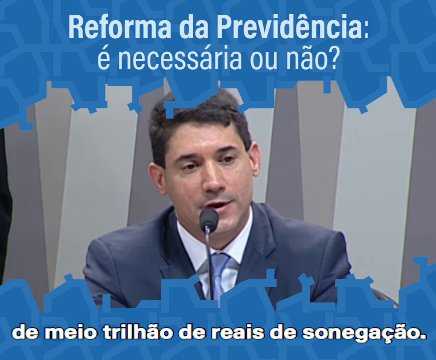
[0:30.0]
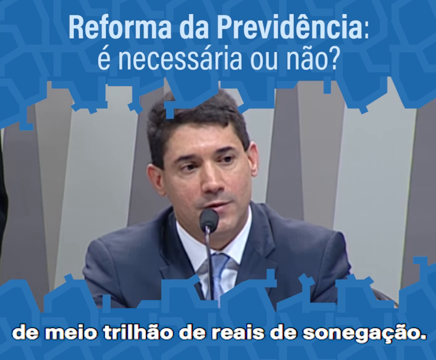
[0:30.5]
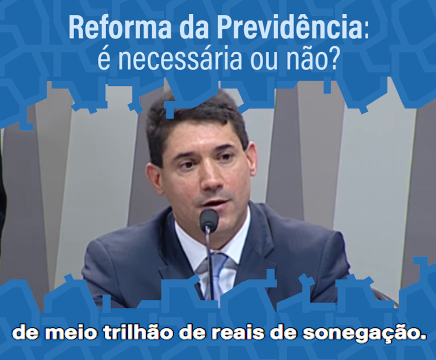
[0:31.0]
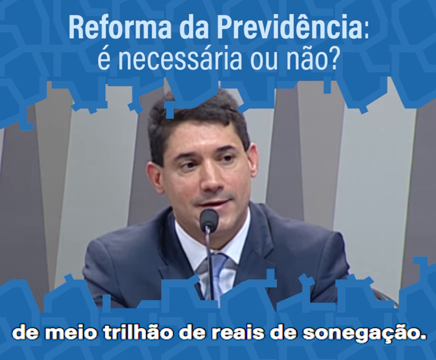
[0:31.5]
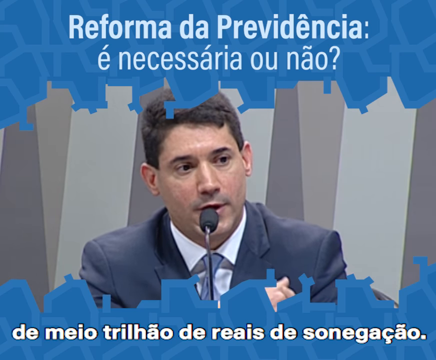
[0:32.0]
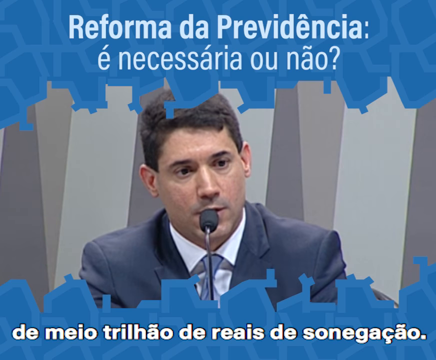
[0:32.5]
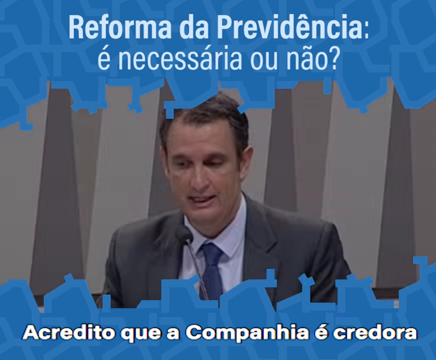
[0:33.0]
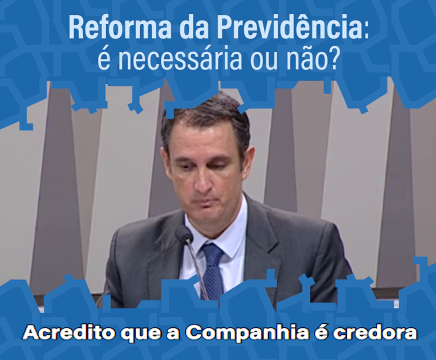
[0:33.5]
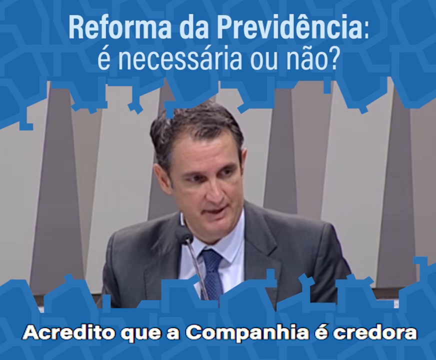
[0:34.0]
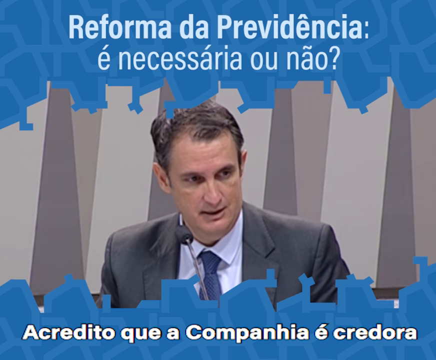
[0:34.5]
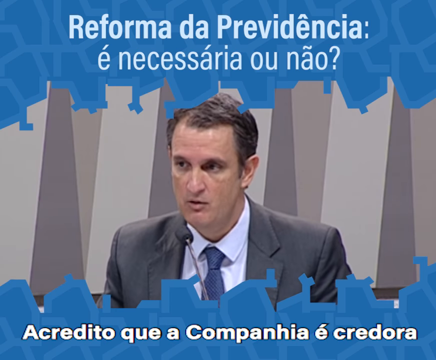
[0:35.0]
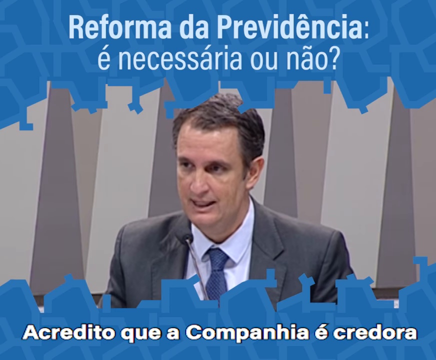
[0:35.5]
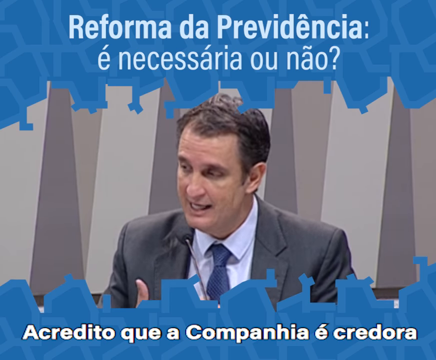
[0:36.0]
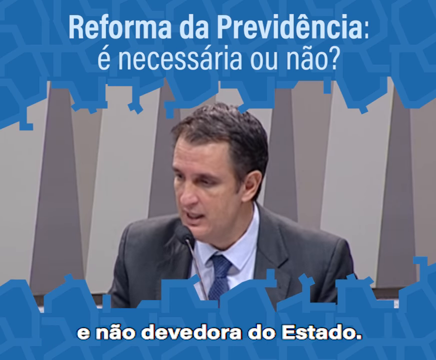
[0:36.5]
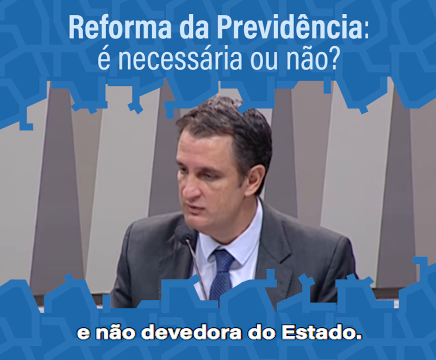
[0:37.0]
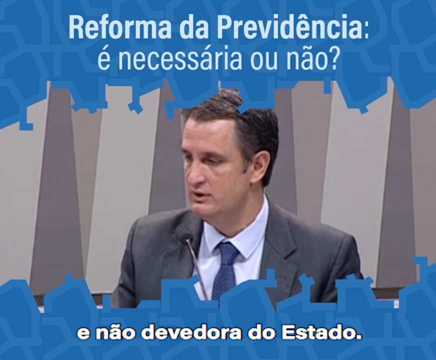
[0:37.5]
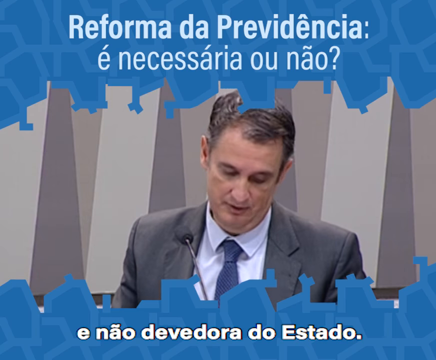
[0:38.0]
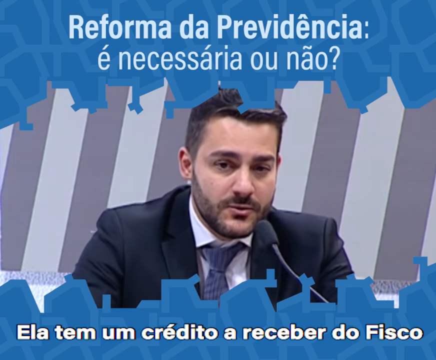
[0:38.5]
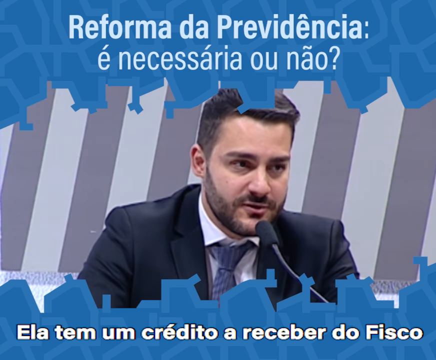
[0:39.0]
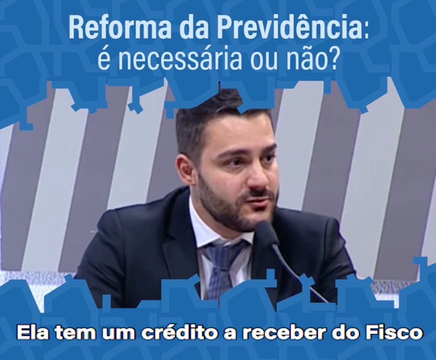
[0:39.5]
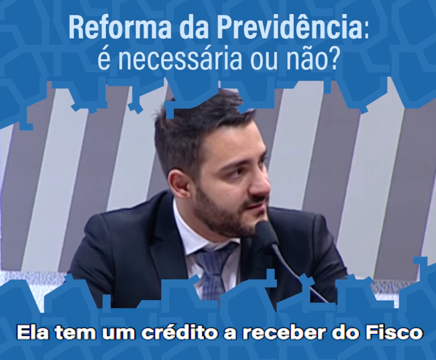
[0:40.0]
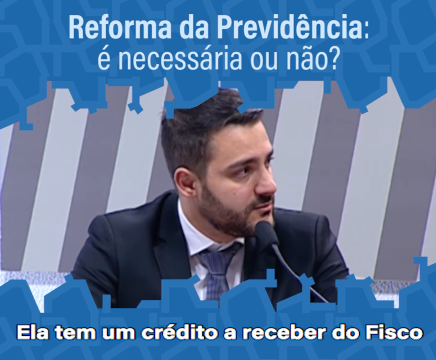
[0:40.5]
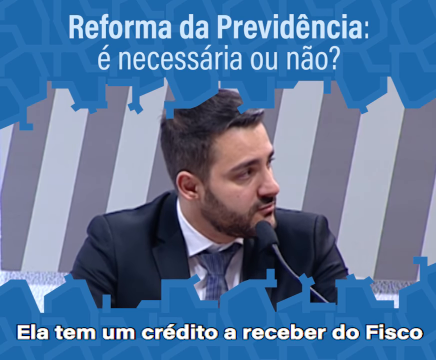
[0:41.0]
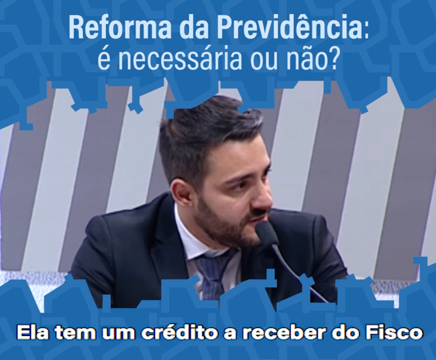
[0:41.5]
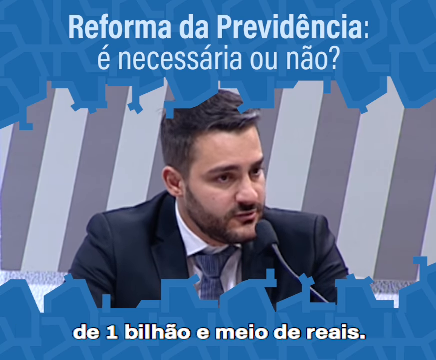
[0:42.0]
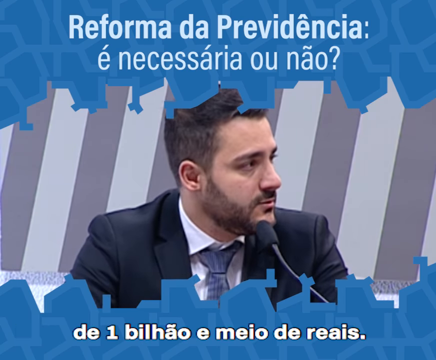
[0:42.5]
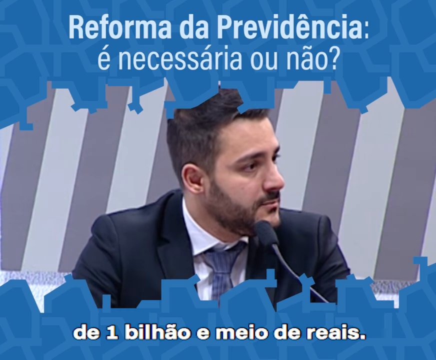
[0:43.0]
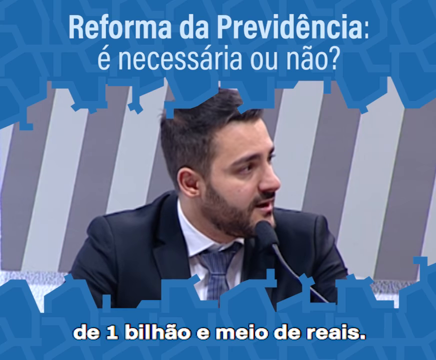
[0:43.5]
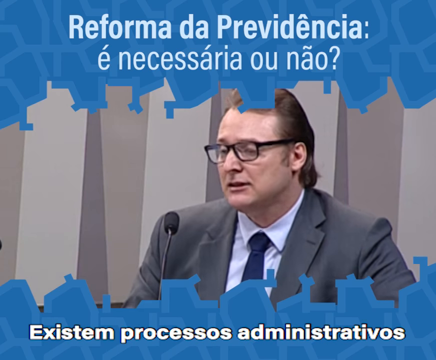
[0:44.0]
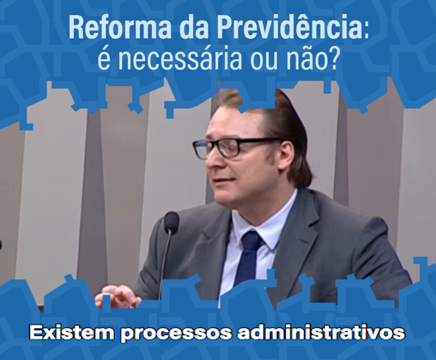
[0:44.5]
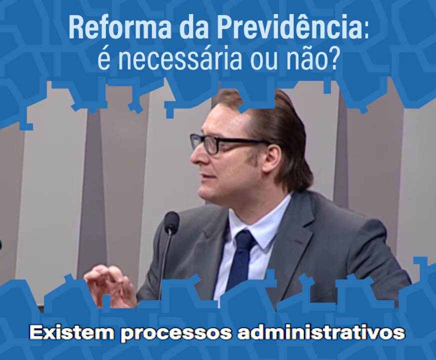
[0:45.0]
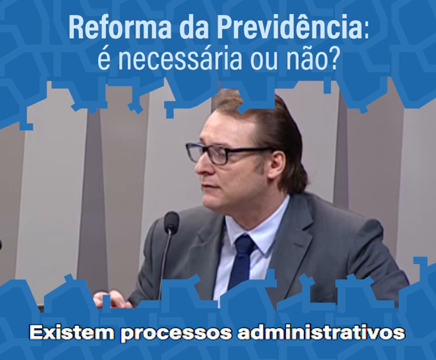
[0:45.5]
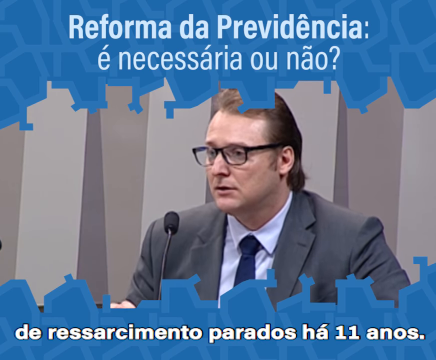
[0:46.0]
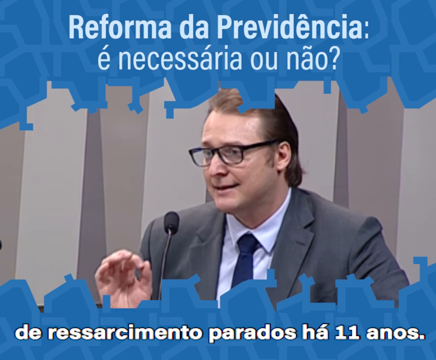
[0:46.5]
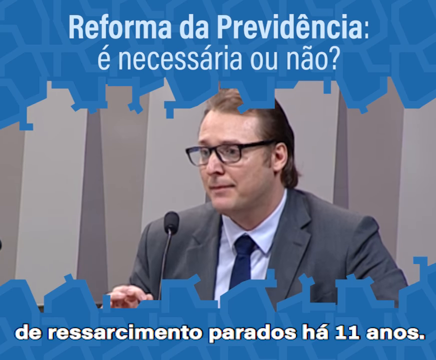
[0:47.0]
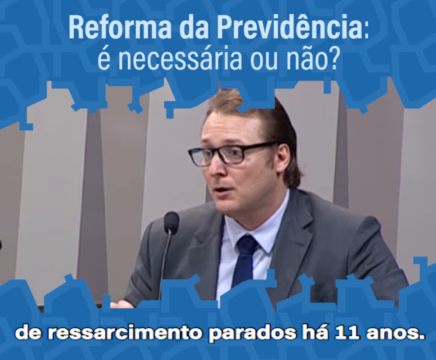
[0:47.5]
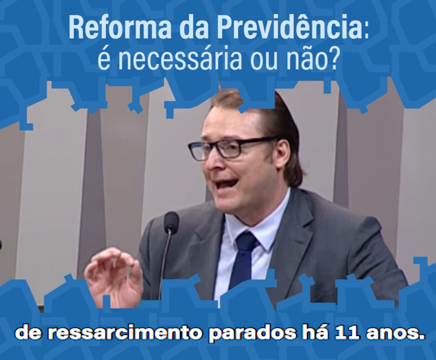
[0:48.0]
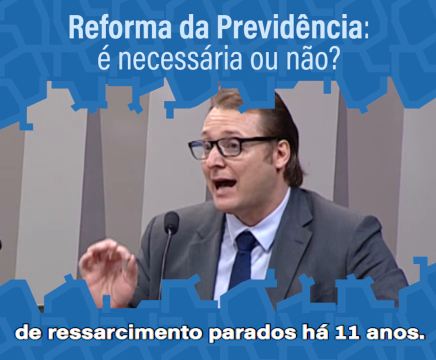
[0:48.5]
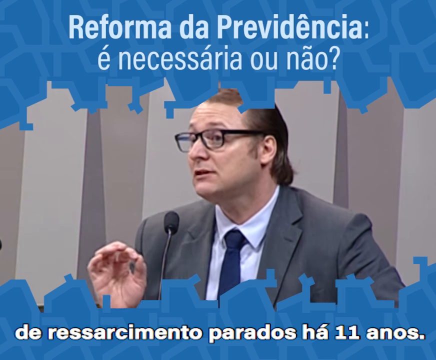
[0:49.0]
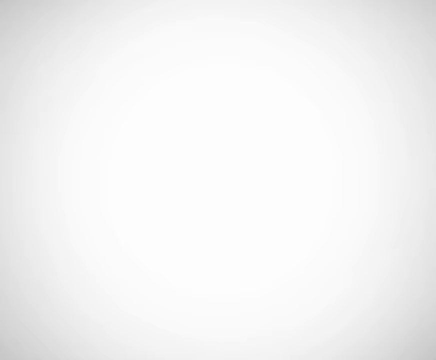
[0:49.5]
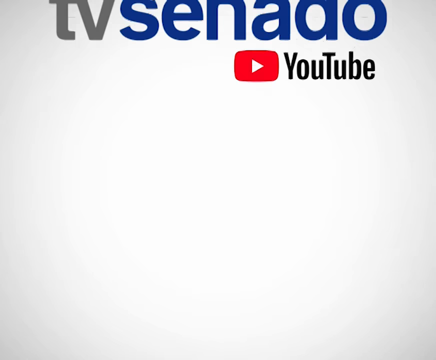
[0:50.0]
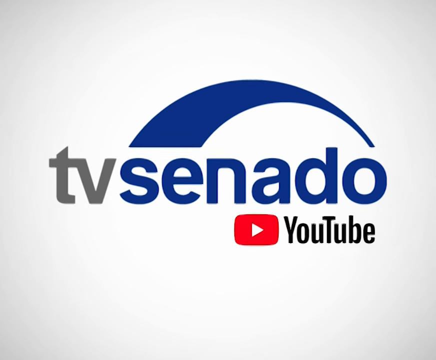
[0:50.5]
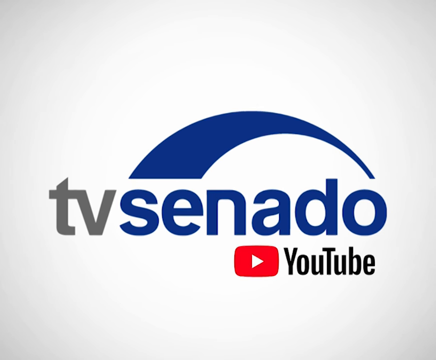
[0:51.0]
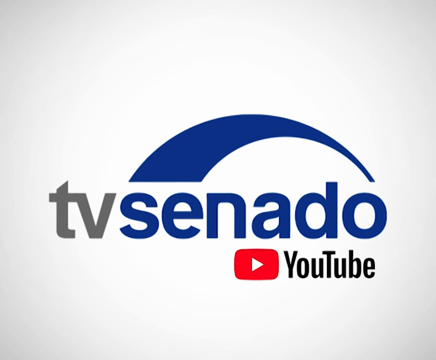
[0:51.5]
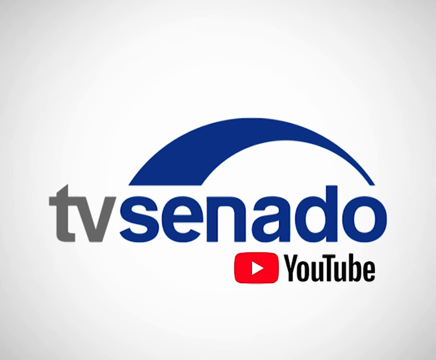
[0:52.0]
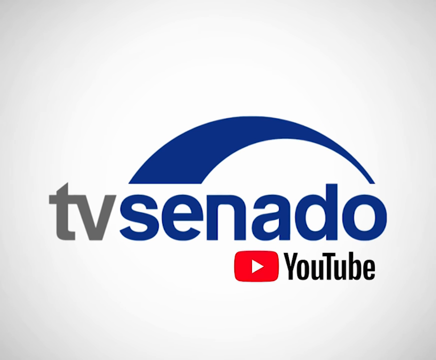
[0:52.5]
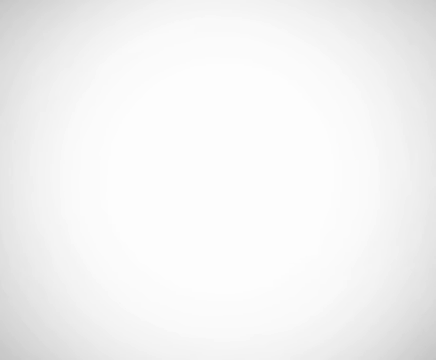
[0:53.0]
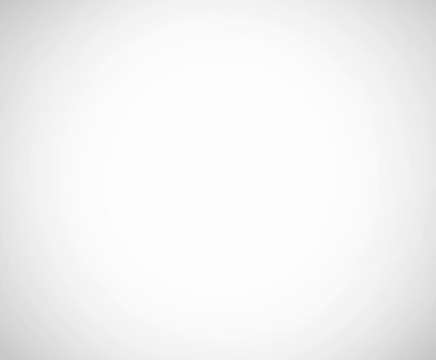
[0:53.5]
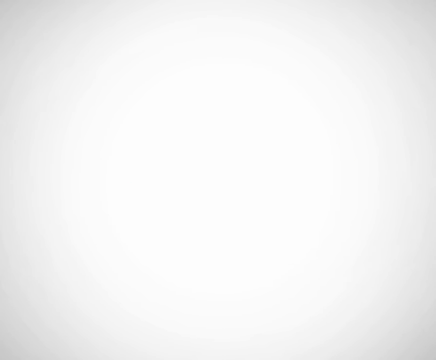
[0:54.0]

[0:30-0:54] A man about 50 to 55 years old, white, with very short black hair, talks calmly and passionately into a microphone. The background is blue at the top and varying shades of grey behind him, and subtitles in Spanish appear at the bottom. The scene changes to a white man with short black hair, standing with a microphone in front of him, wearing a grey suit, a dark blue tie and a white shirt. He talks into the microphone like a typical campaigner or politician trying to convince the audience. The pattern continues, with the microphone moving around the parliament from speaker to speaker. The last slide shows social media handles for the parliament.